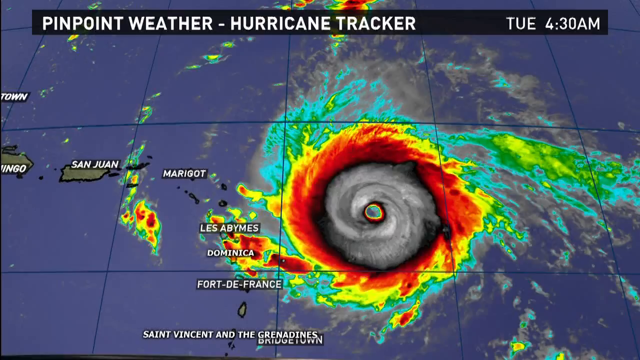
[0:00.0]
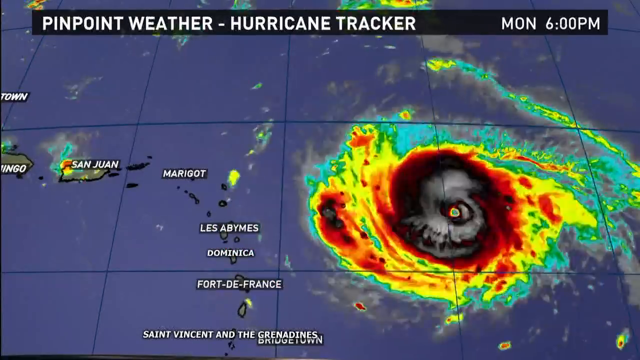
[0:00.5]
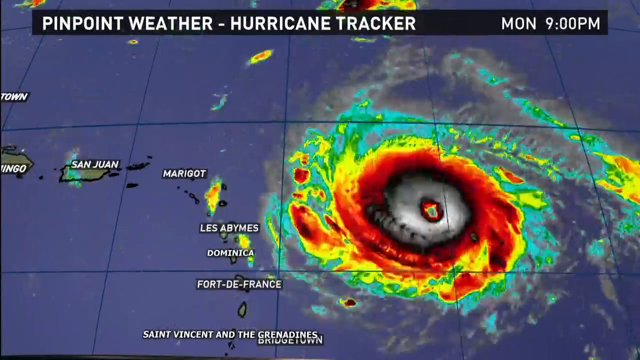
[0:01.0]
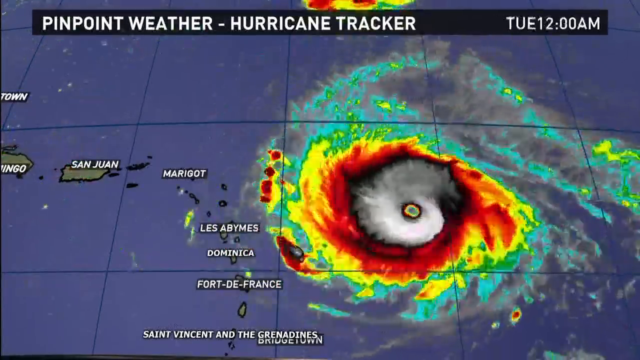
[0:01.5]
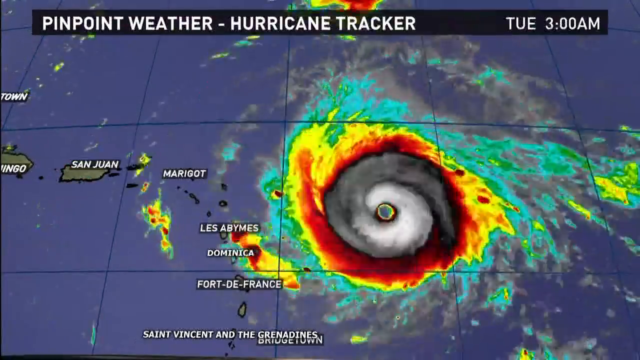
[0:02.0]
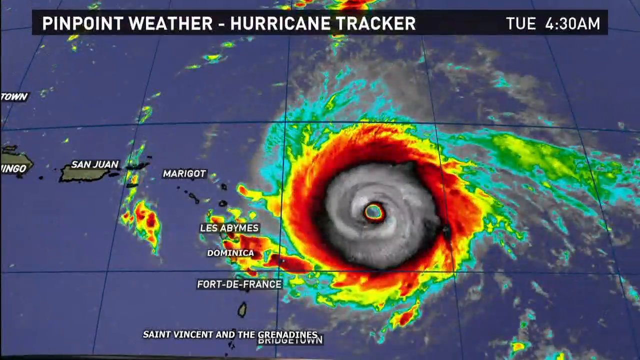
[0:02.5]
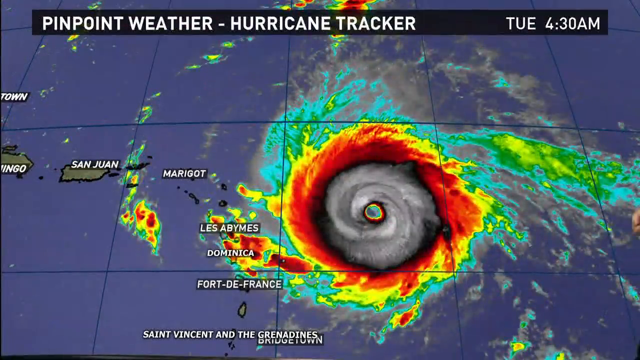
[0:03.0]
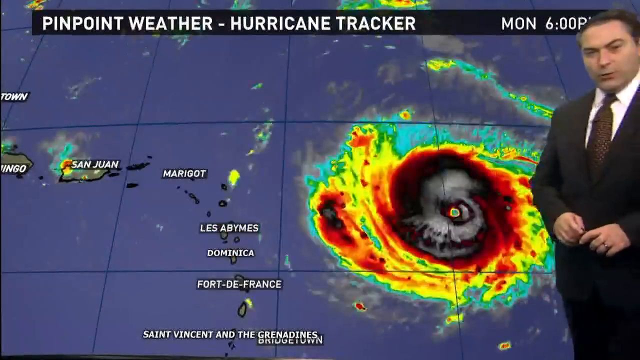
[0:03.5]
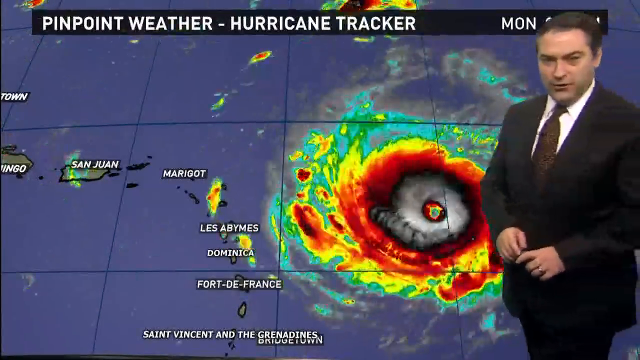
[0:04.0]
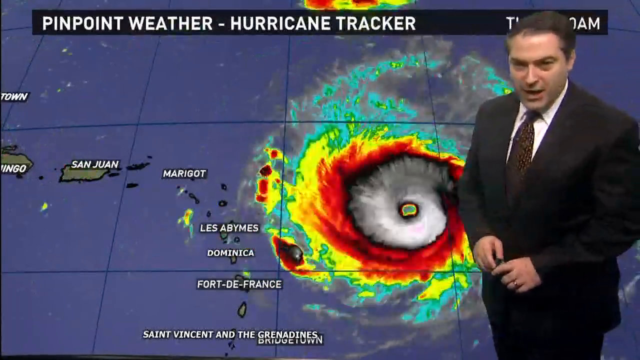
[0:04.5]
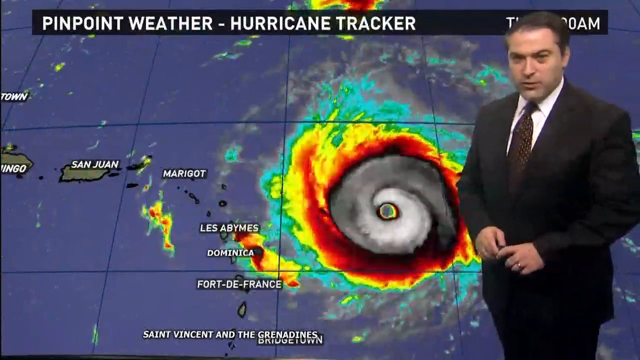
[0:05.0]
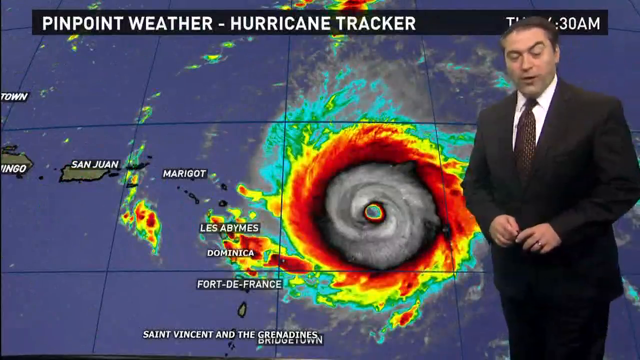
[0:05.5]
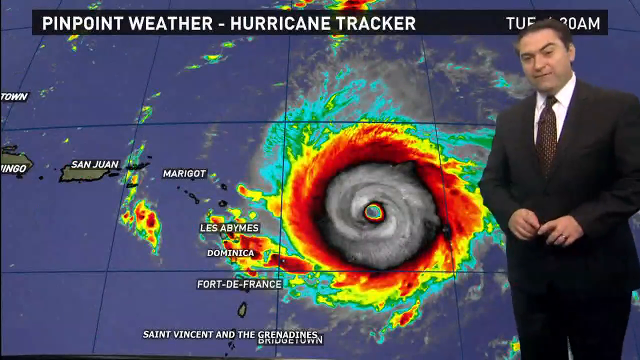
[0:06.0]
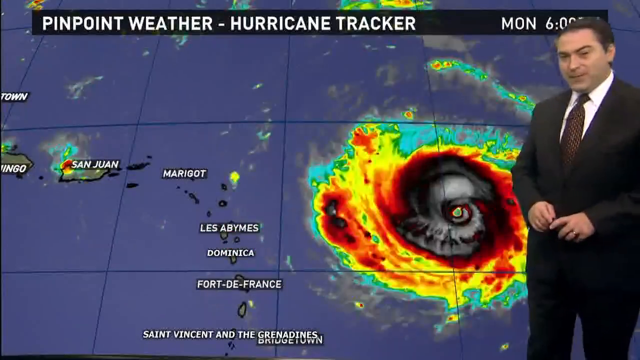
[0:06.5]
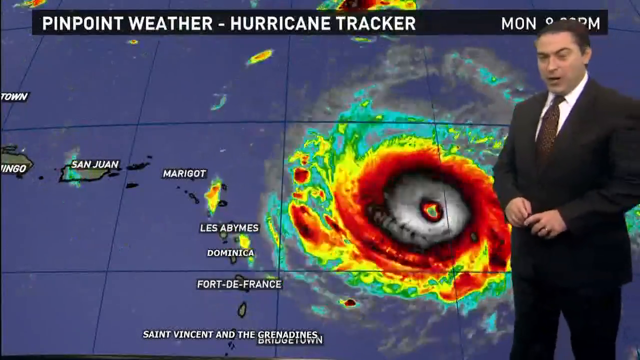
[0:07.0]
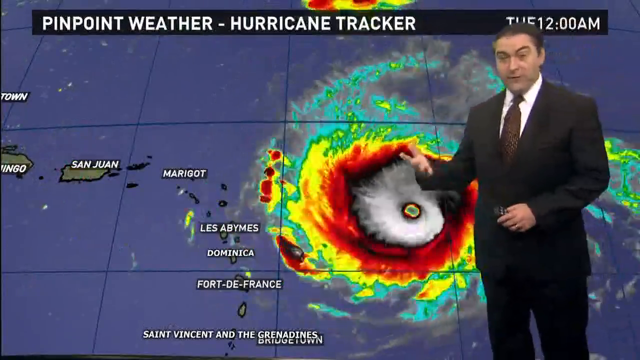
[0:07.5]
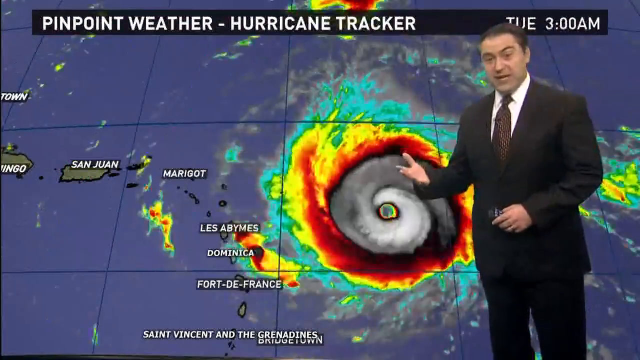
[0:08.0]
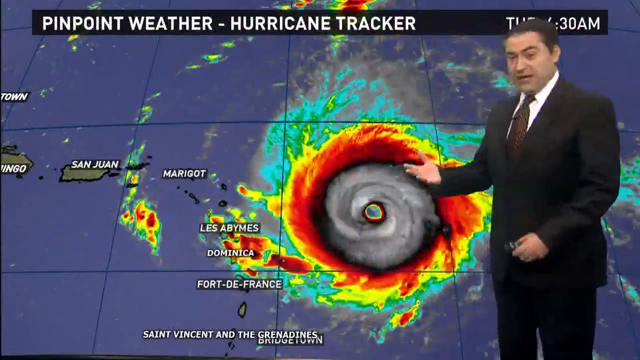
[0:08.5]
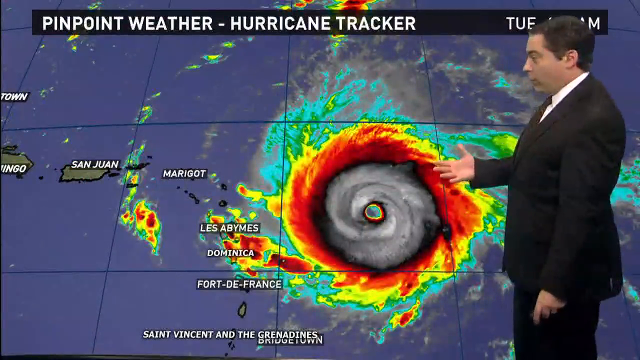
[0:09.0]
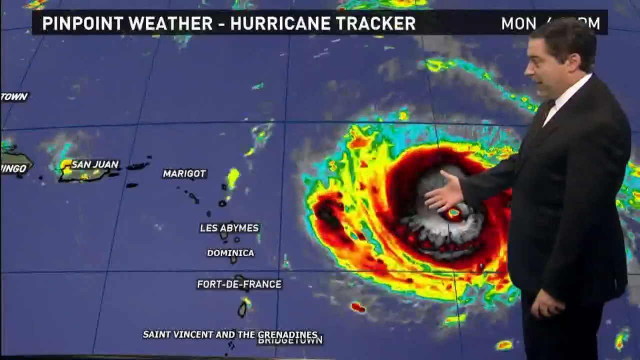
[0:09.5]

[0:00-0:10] The video opens on a map, apparently a weather map, of a hurricane in the Caribbean. Text at the top reads "pinpoint weather hurricane tracker, Tuesday 4.30am". On the left of the screen is the very edge of some island, probably Cuba, then the Dominican, then San Juan and Puerto Rico, then some smaller islands. A very large hurricane is over the center of the screen, more towards the right, with light blues and greens on the outside, then a rim of yellow, then red, then black, then gray, and a middle of green and black. The ring around it looks like a ring of fire. The hurricane swirls from the right side of the screen towards the left and stops before where Port de France and Dominica are. As the hurricane rolls along, the weatherman, wearing a black suit, white shirt and dark tie, comes into the screen on the right side and uses his right hand to point at the screen.